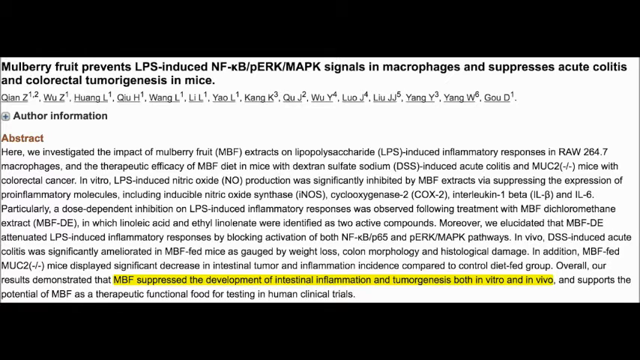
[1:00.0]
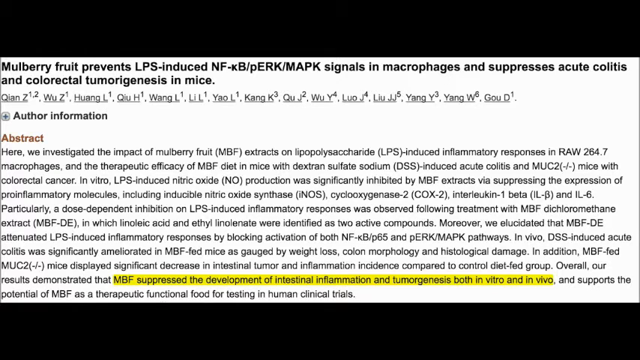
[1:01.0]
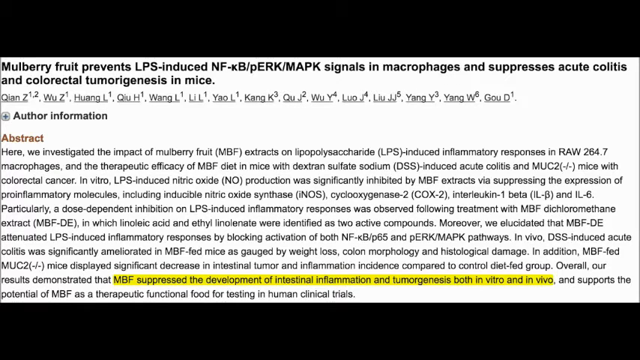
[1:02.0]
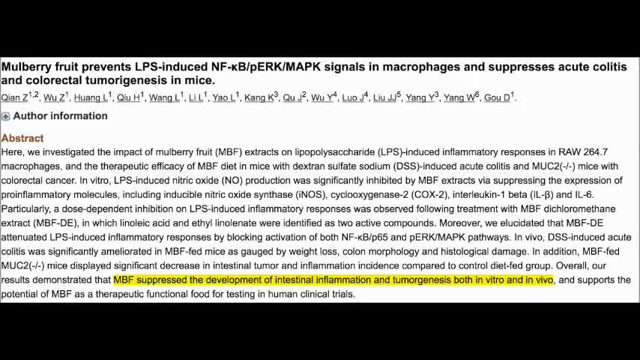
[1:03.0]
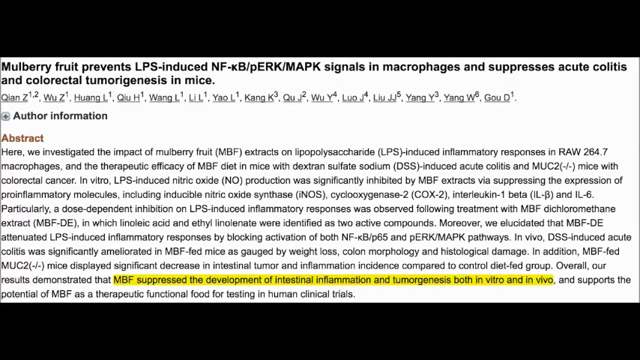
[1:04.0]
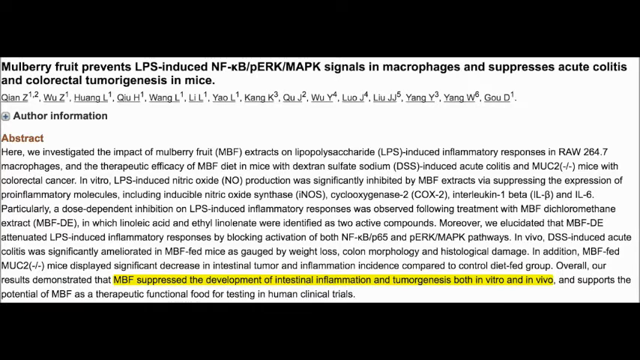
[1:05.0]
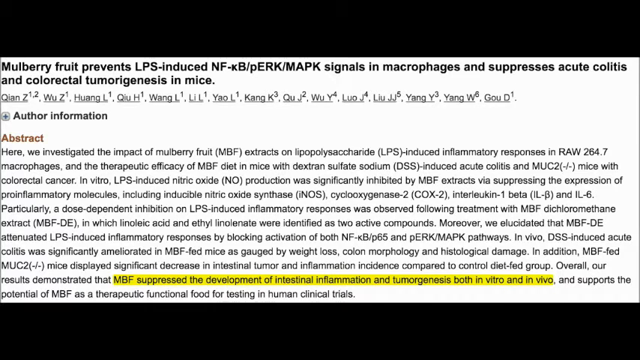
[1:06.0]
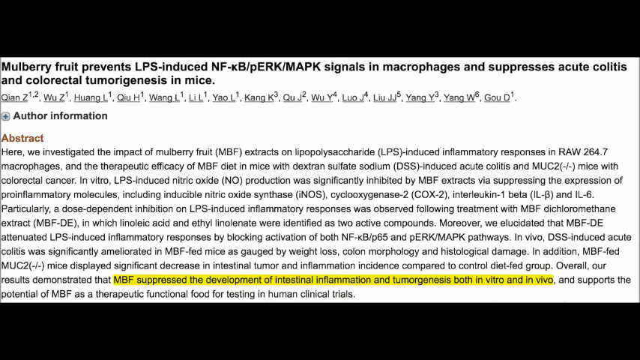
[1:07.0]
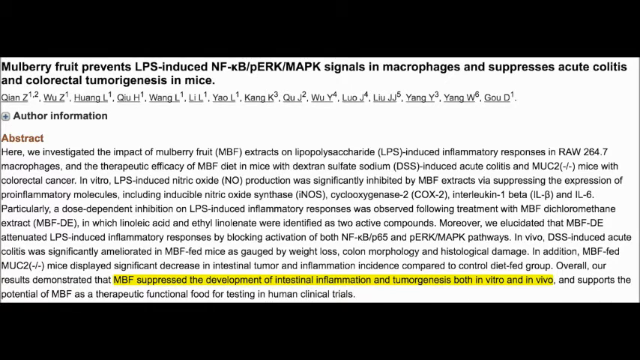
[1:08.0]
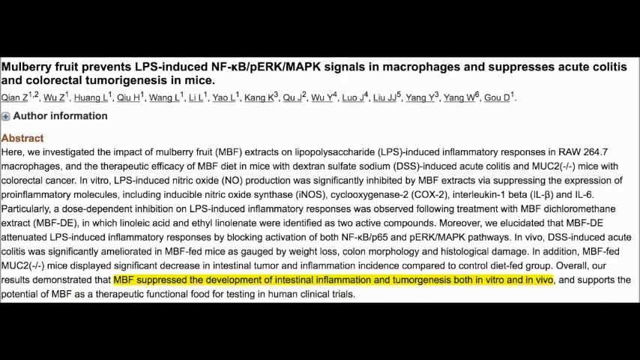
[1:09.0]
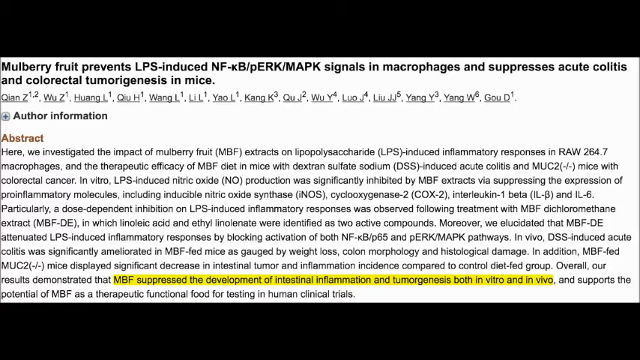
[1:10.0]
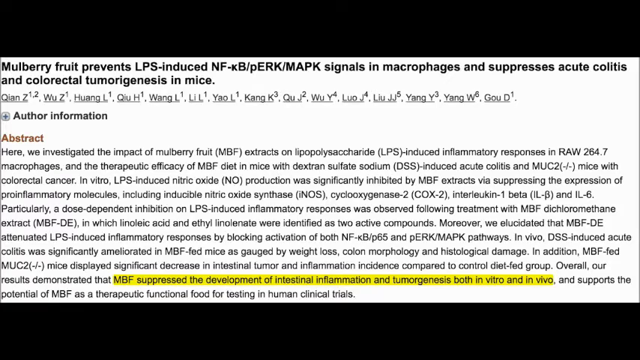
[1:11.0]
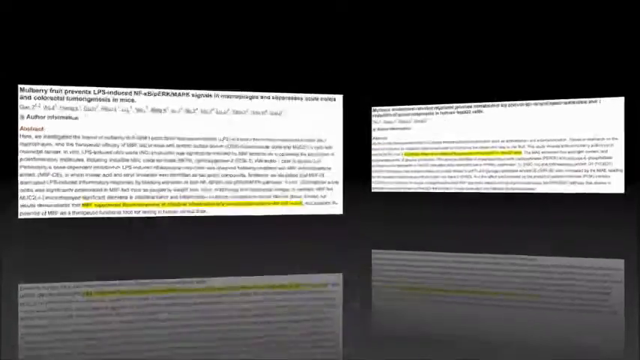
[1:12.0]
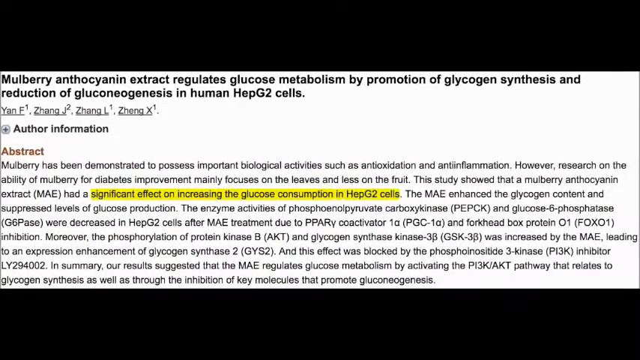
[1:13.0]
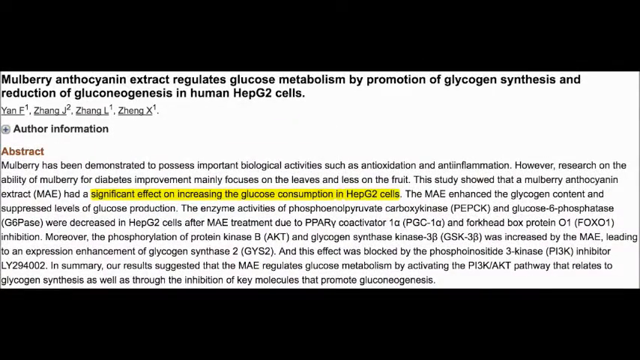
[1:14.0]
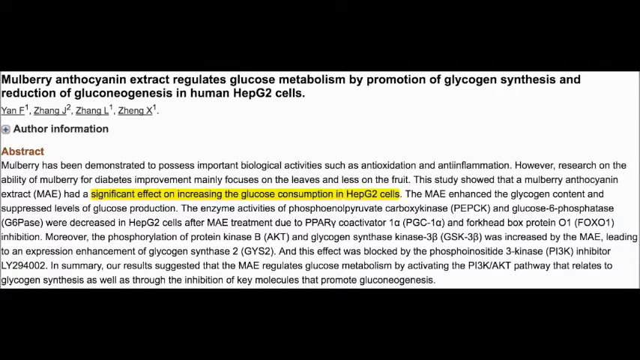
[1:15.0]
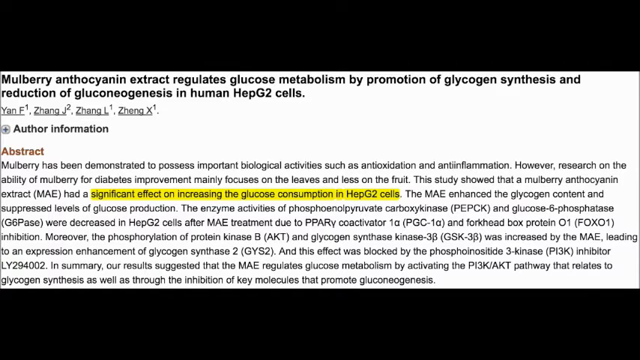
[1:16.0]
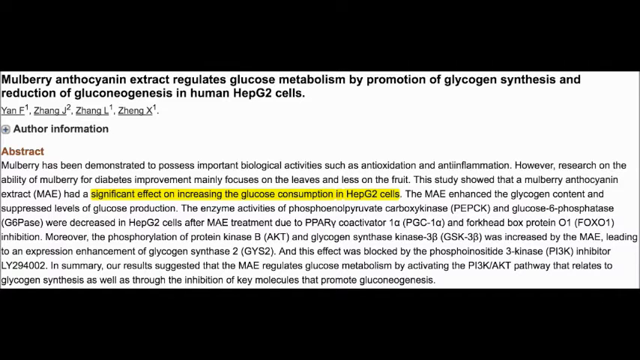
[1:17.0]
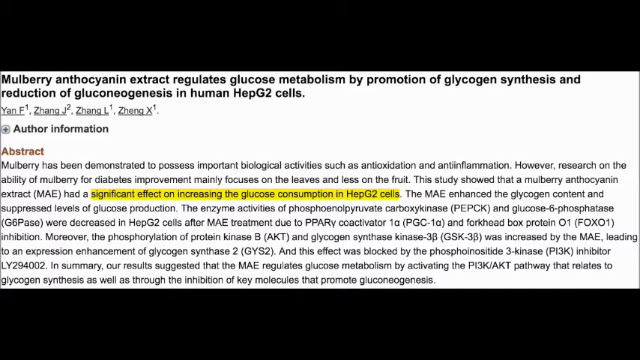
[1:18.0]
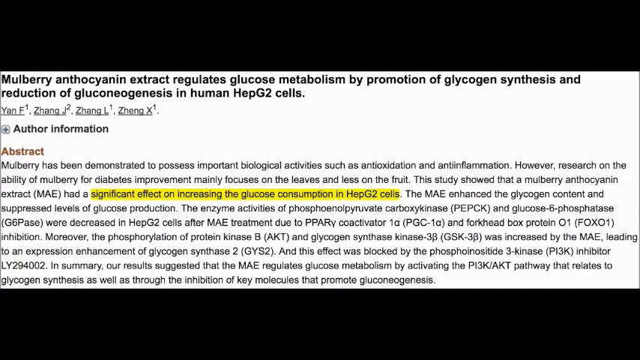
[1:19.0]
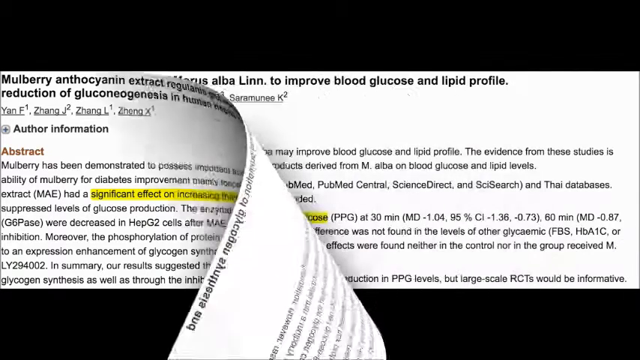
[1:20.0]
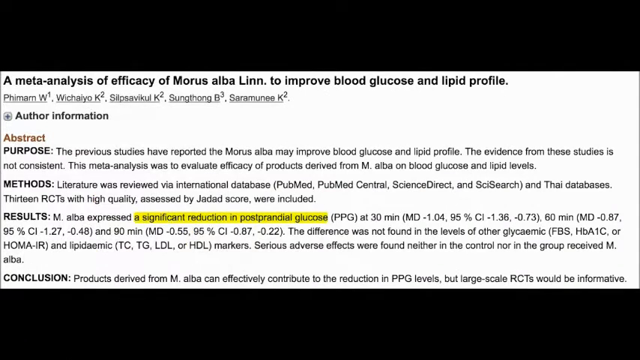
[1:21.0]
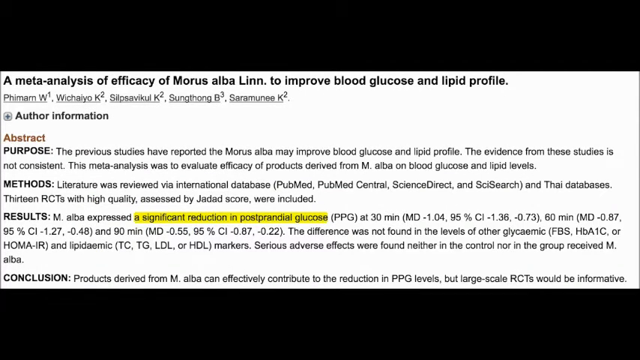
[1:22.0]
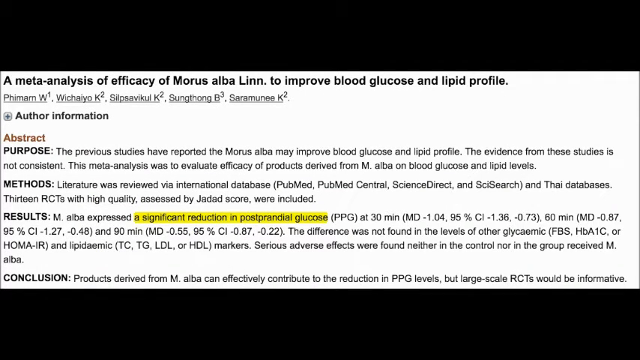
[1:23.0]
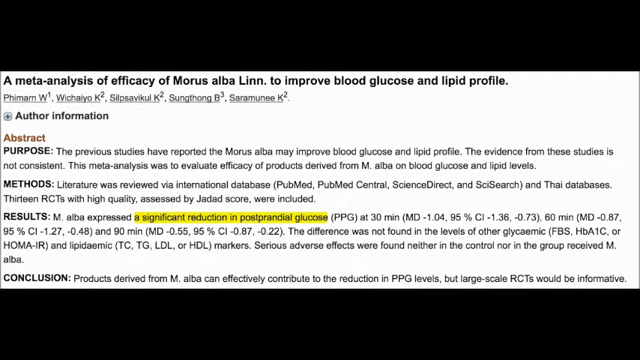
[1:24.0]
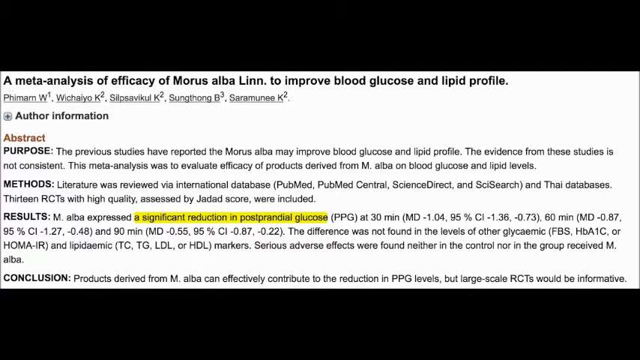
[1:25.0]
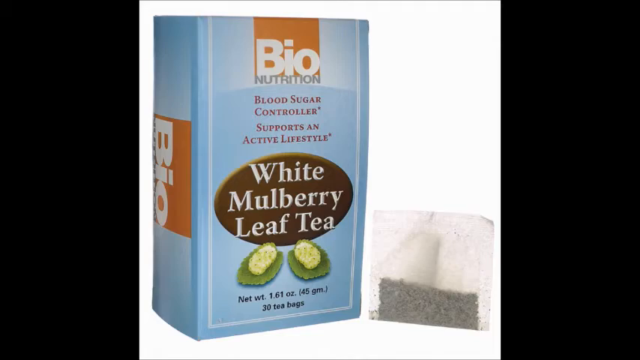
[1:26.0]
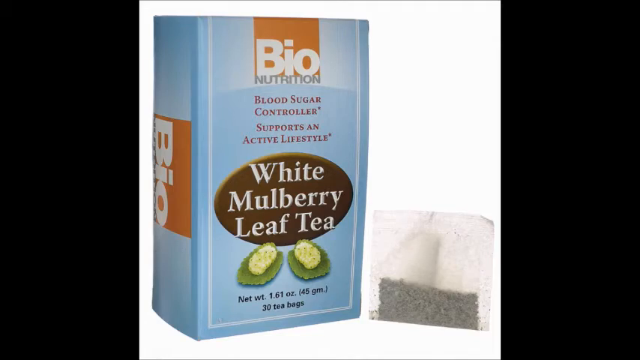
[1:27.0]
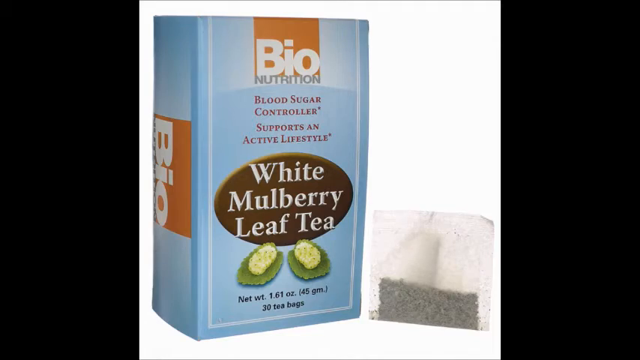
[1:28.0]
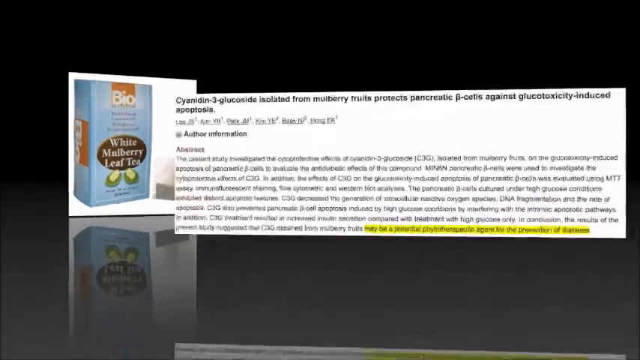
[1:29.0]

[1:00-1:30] A scientific study is on the screen, titled "mulberry fruit prevents LPS-induced NF signals in macrophages and suppresses acute colitis and colorectal tumorogenesis in mice." Its abstract describes investigating the impact of mulberry fruit extracts on liposaccharides-induced inflammatory responses in RAW 264.7 macrophages and the therapeutic efficacy of an MBF diet in mice with dextrin sulfite sodium-induced acute colitis. A section highlighted in yellow says that MBF suppressed the development of intestinal inflammation and tumorogenesis both in vitro and in vivo. That study disappears and another comes up, titled "mulberry anthocyanin extract regulates glucose metabolism by promotion of glycogen synthesis and reduction of glucogenesis in human hep G2 cells." Its highlighted section states that the mulberry anthocyanin extract, or MAE, had an effect on increasing glucose consumption in hep G2 cells.